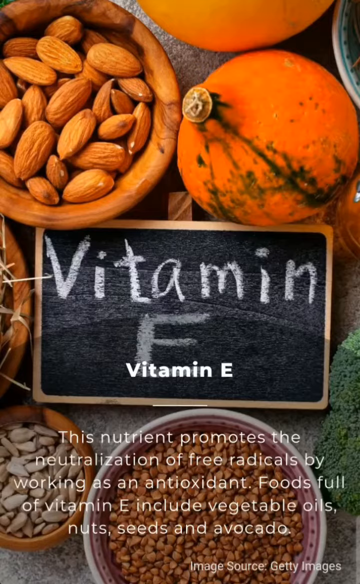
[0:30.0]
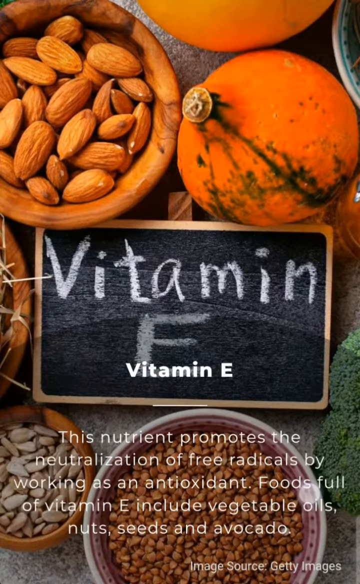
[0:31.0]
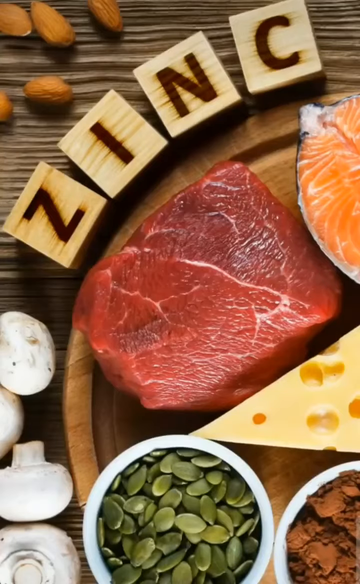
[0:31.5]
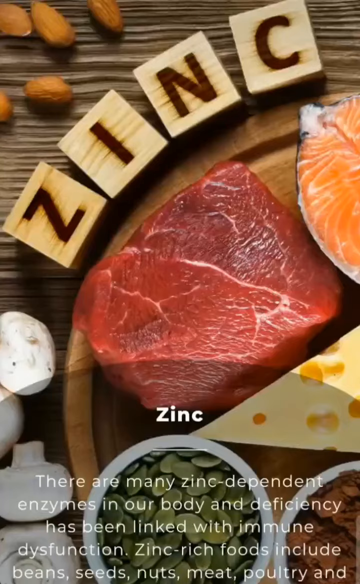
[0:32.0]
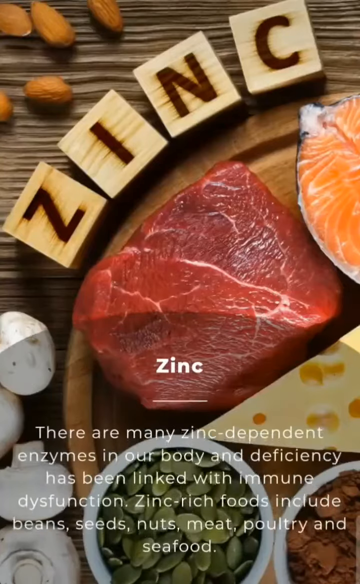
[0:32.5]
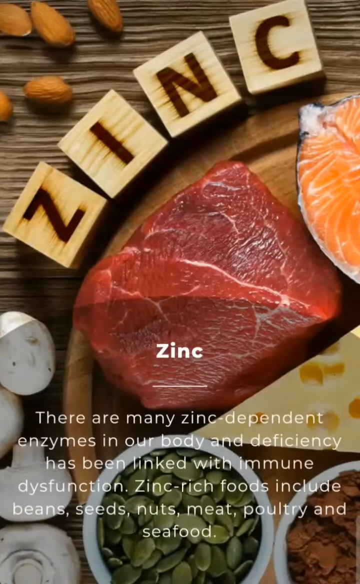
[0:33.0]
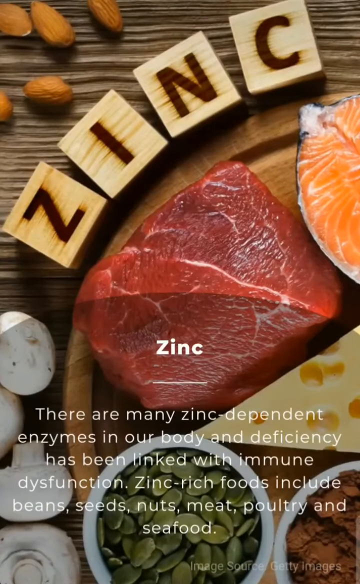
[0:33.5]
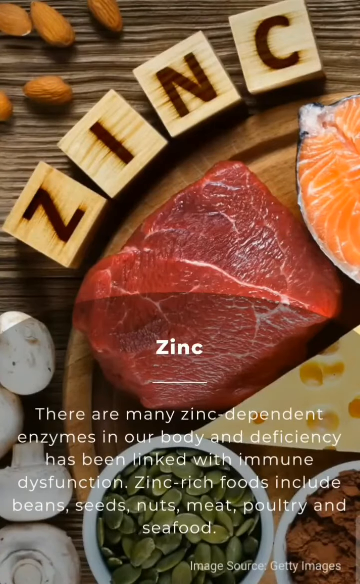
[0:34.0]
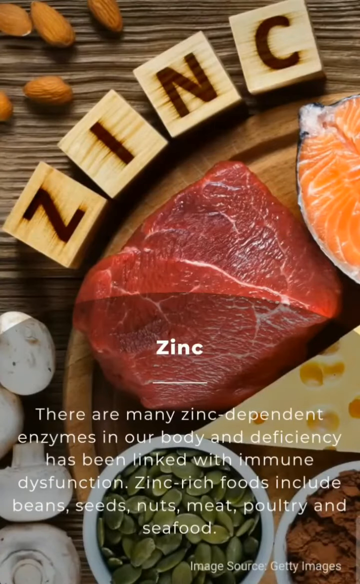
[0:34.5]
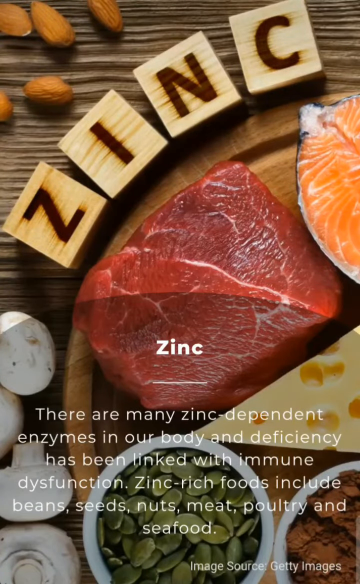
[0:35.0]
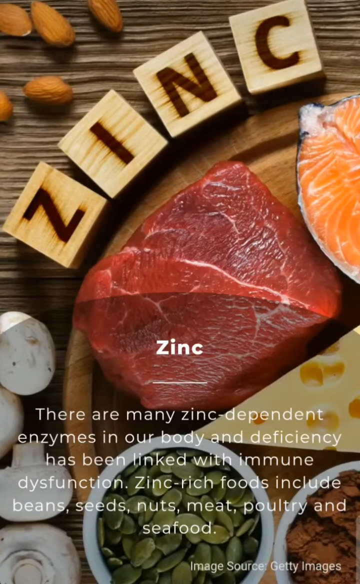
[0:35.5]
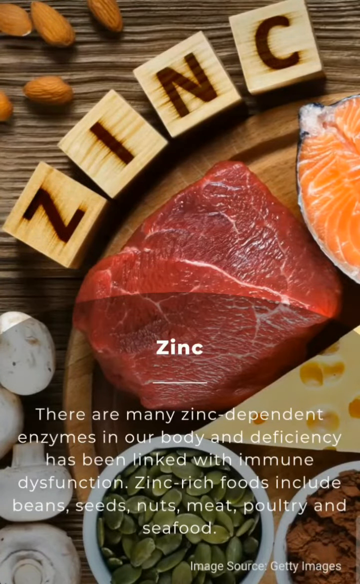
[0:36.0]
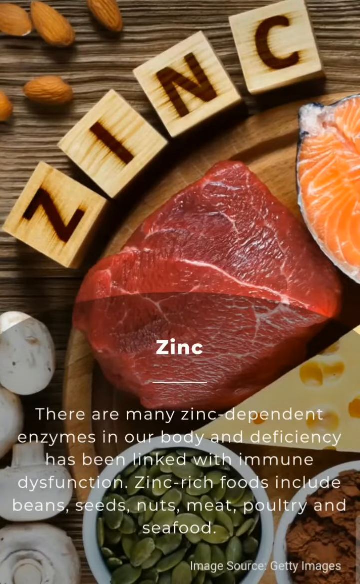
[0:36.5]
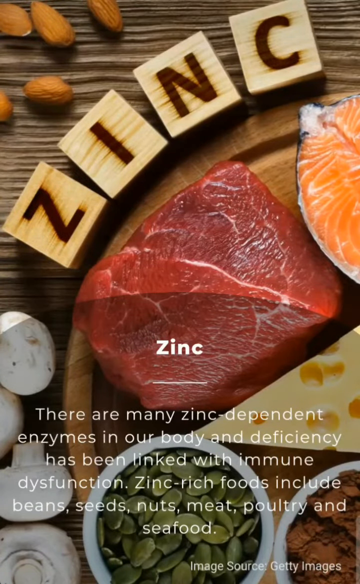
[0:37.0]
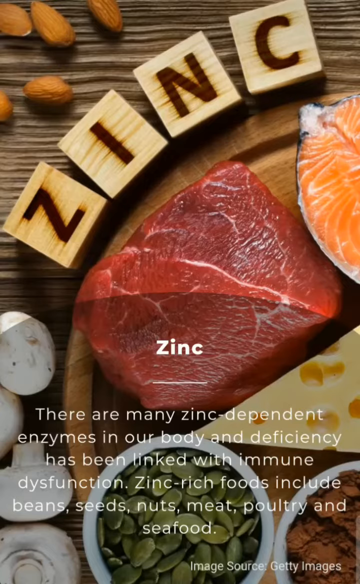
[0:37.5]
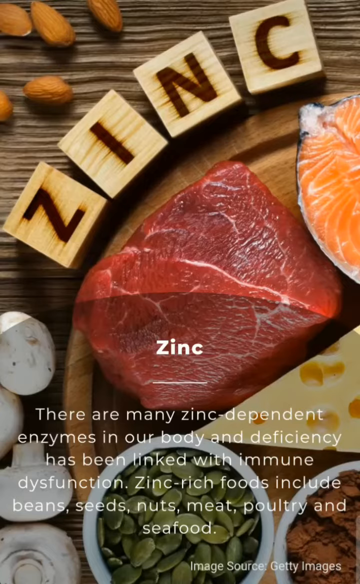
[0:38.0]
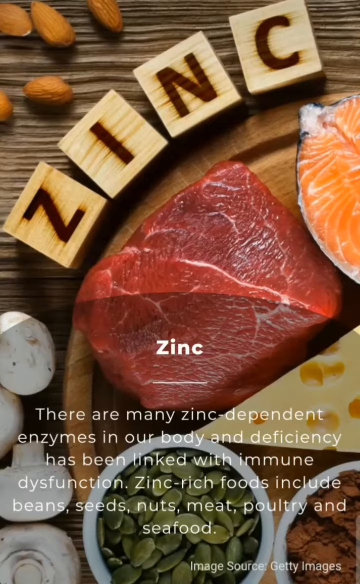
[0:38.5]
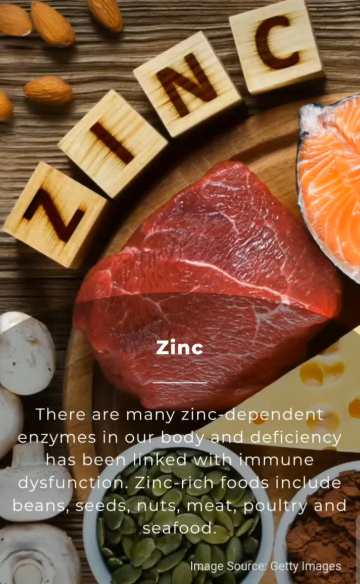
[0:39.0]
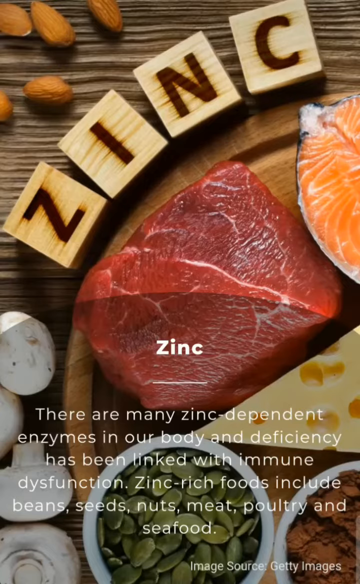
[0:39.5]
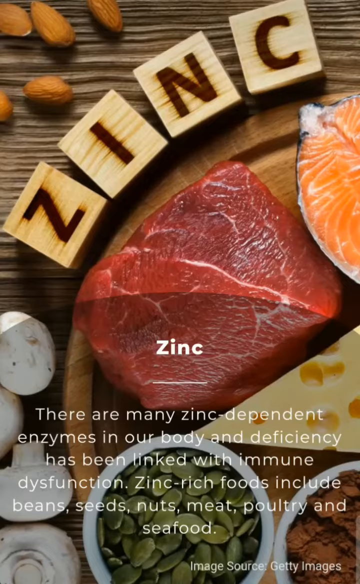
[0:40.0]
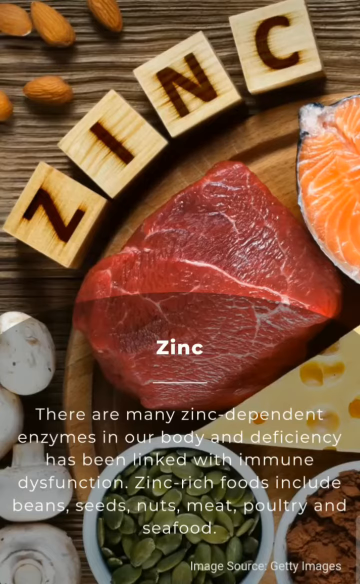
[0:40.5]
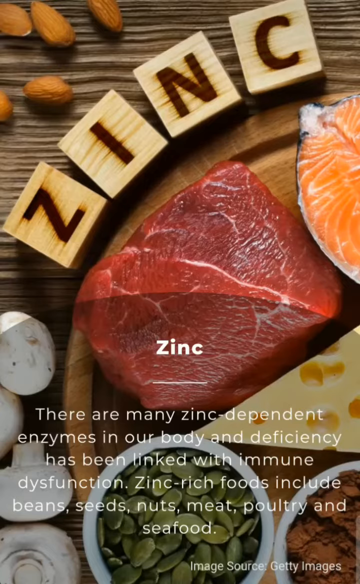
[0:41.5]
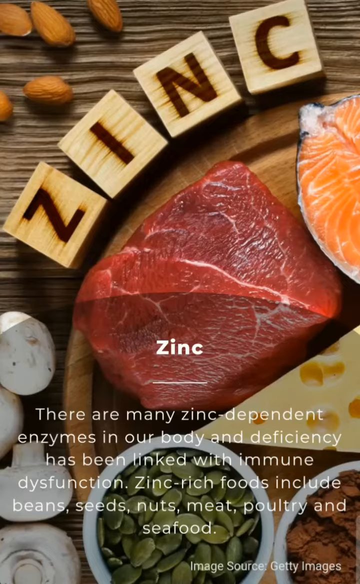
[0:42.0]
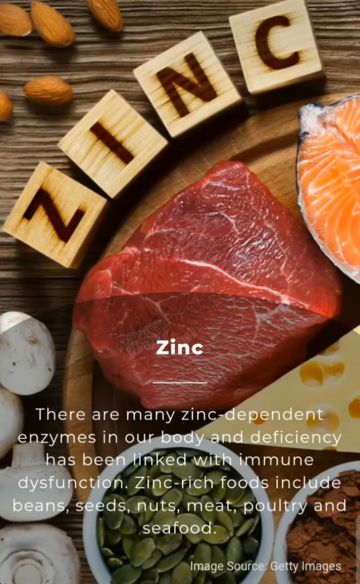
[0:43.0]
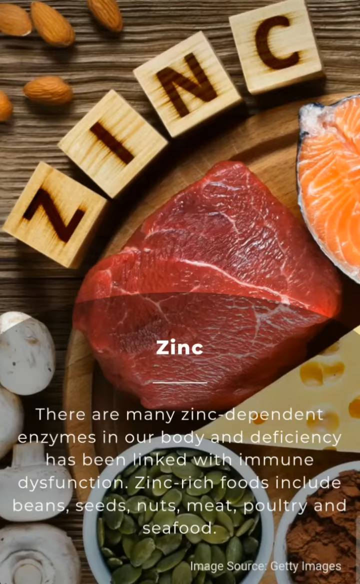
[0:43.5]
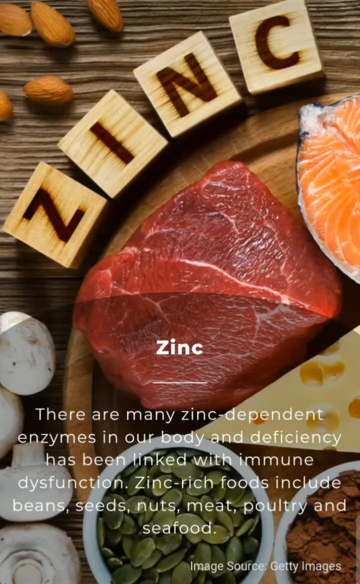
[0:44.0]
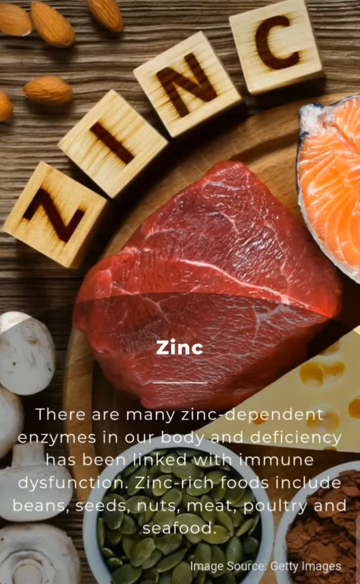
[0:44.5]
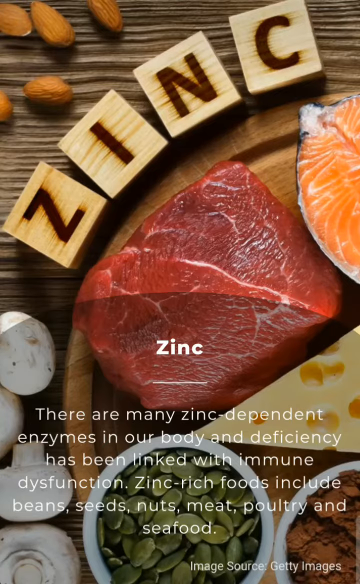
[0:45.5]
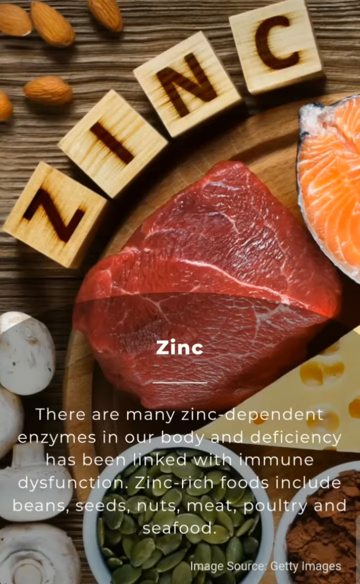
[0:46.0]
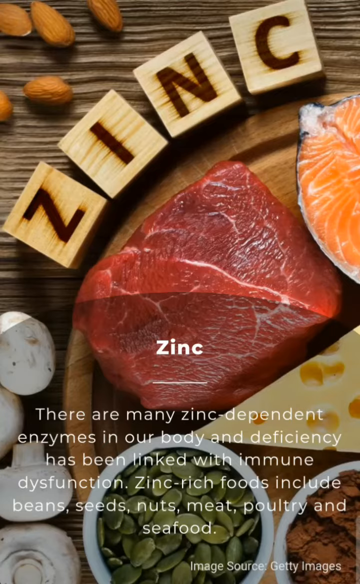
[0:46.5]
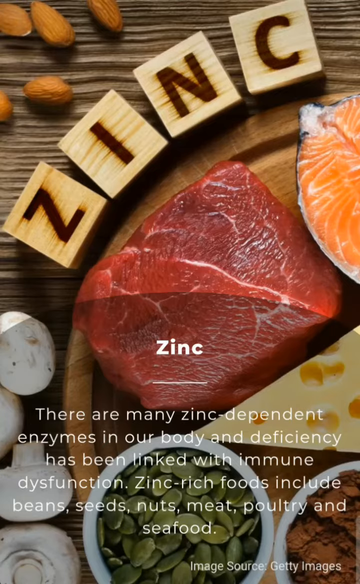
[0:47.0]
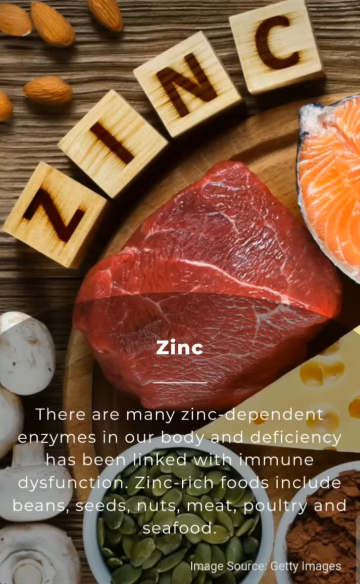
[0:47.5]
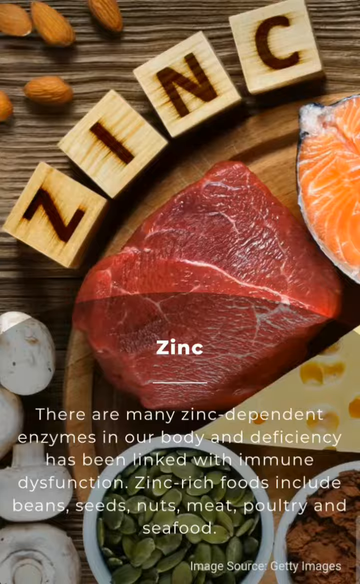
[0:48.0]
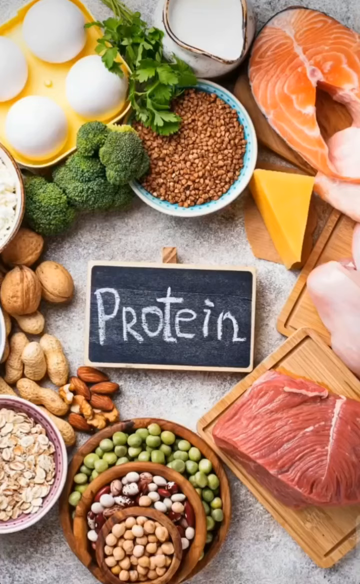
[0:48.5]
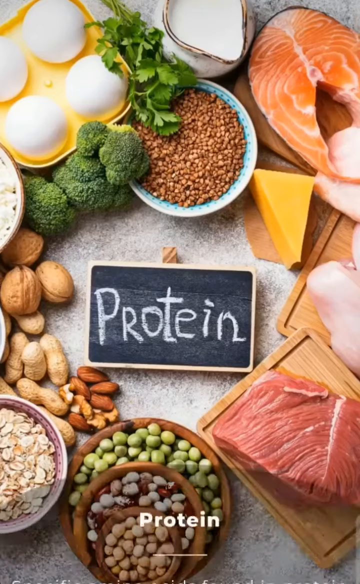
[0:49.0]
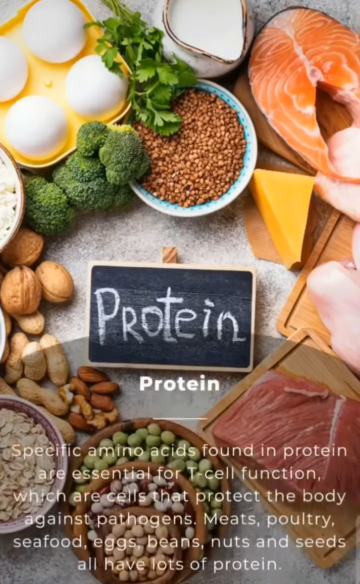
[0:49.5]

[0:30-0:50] The end of the vitamin E slide is shown, and then the video moves on to zinc. This time "Zinc" is written on little wooden blocks with letters on them. The text reads "there are many Zinc-dependent enzymes in our body, and deficiency has been linked with immune dysfunction. Zinc-rich foods include beans, seeds, nuts, meat, poultry, and seafood." Laid out around the word are many different foods, apparently rich in zinc: red meat that looks like a kind of steak, part of a salmon fillet, a block of cheese, what looks like some kind of unidentified beans, a lot of mushrooms, and a few nuts. At the end the slide changes to protein, but the full slide is not yet shown.